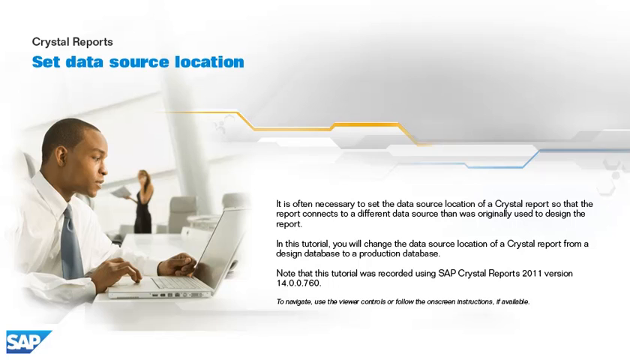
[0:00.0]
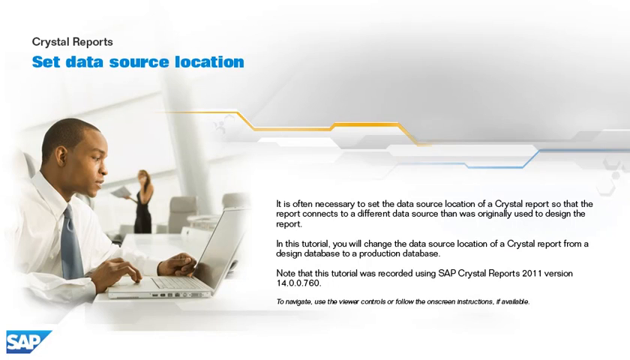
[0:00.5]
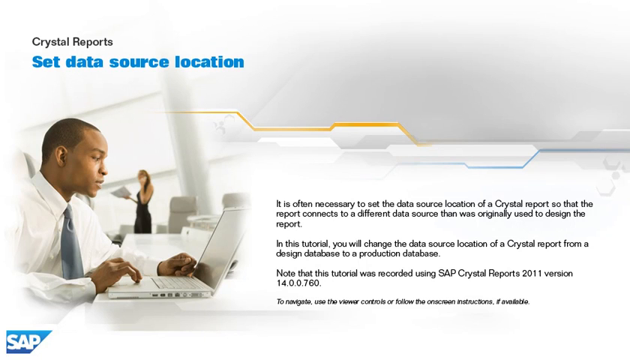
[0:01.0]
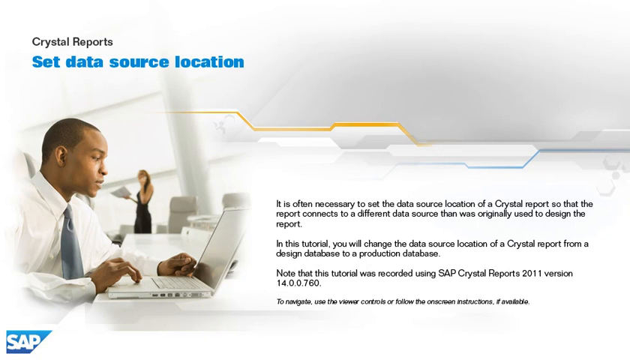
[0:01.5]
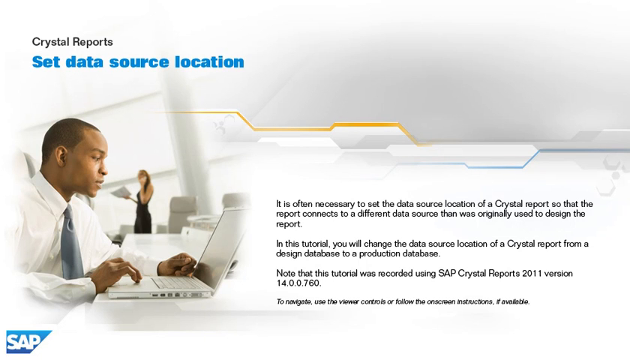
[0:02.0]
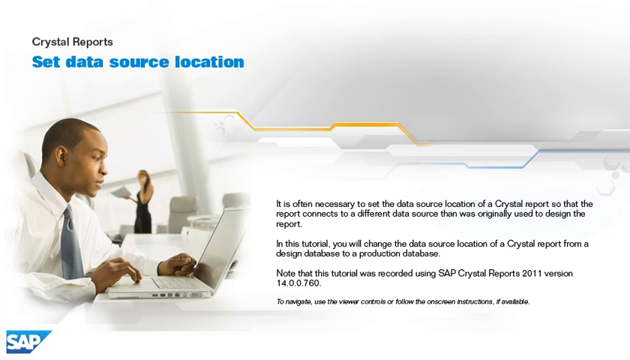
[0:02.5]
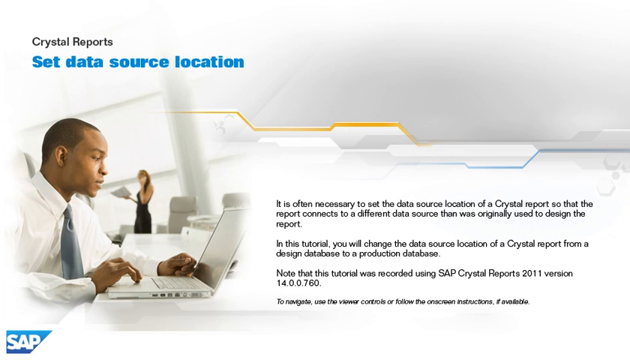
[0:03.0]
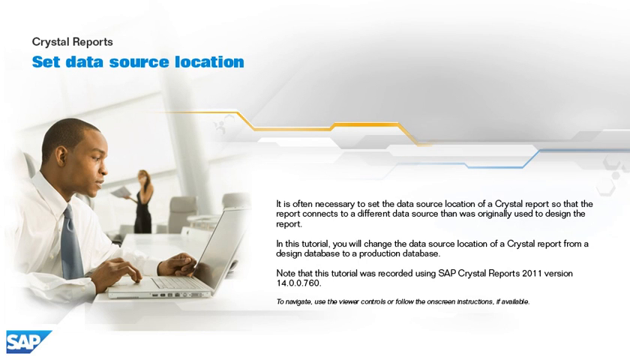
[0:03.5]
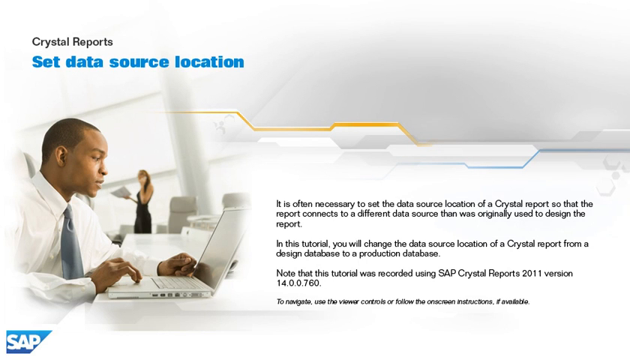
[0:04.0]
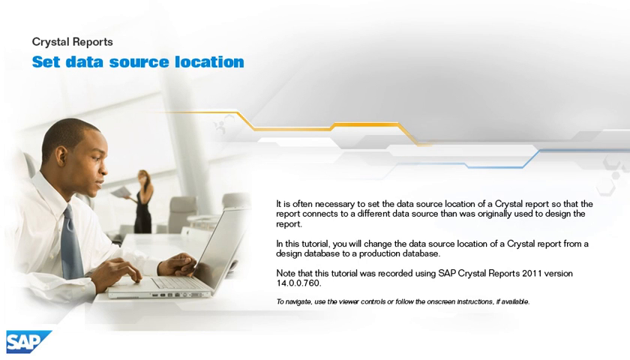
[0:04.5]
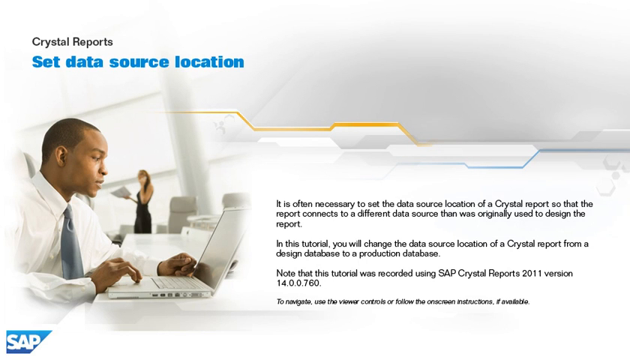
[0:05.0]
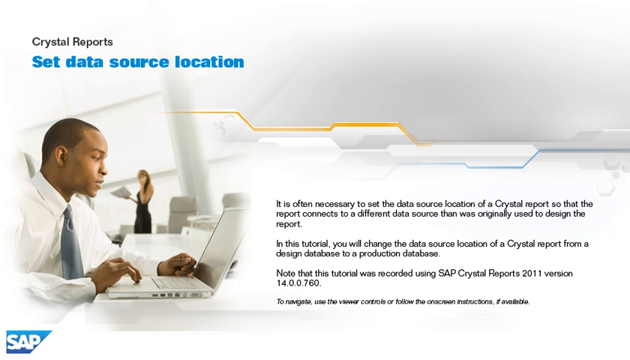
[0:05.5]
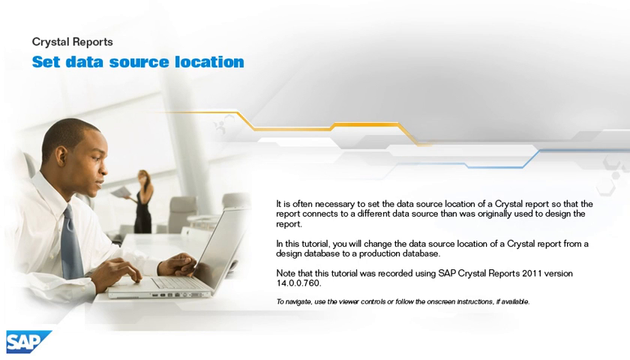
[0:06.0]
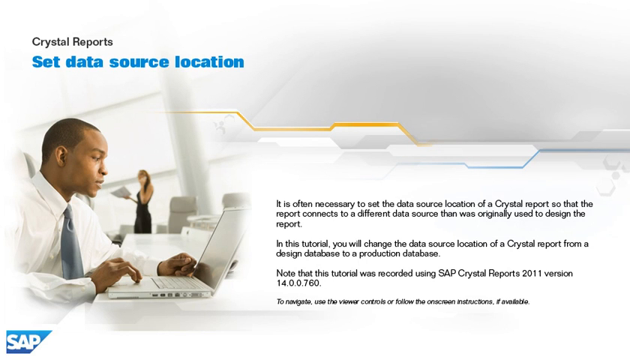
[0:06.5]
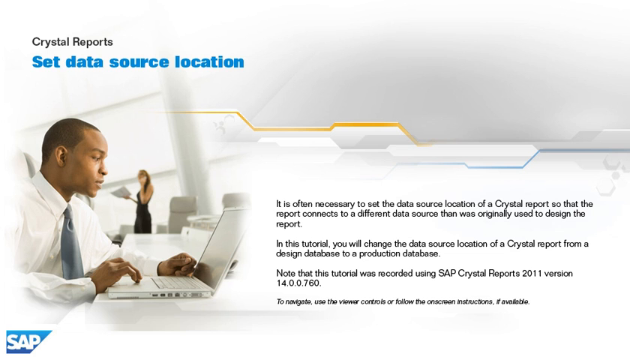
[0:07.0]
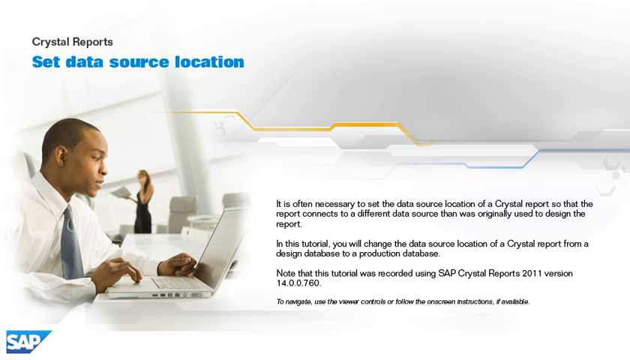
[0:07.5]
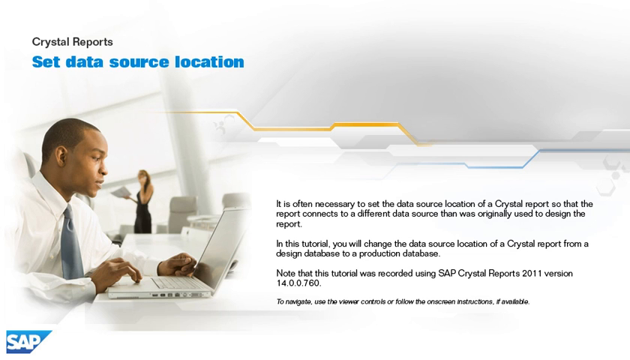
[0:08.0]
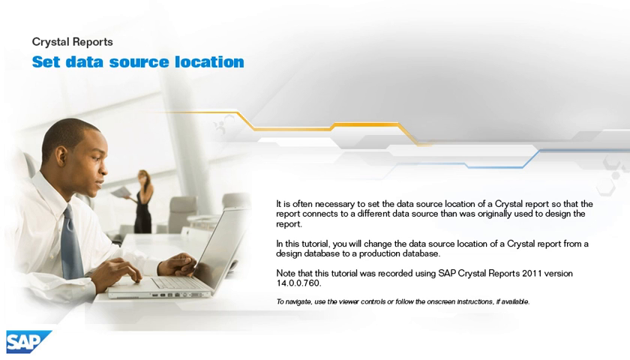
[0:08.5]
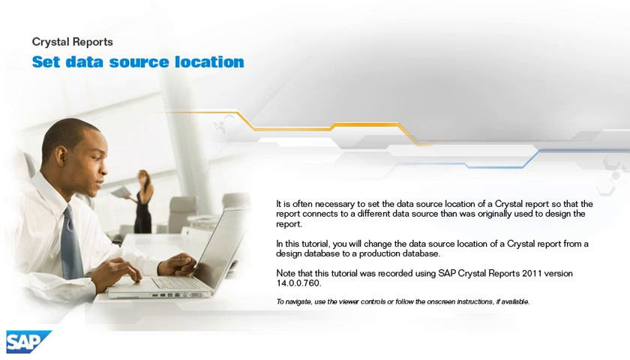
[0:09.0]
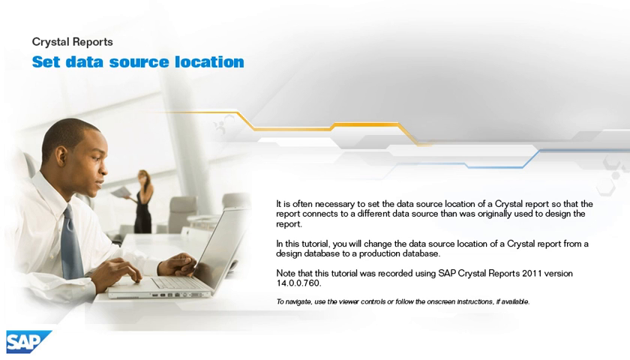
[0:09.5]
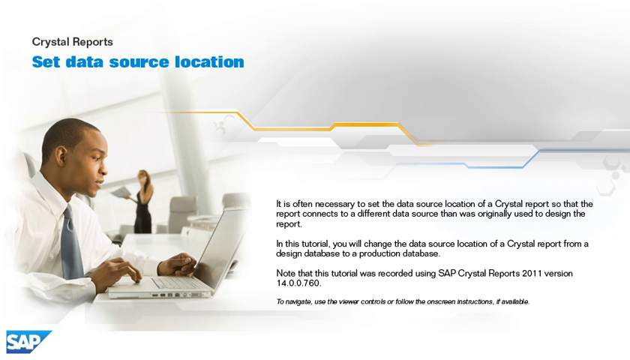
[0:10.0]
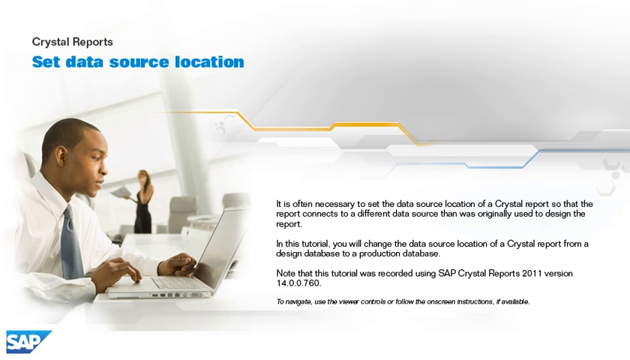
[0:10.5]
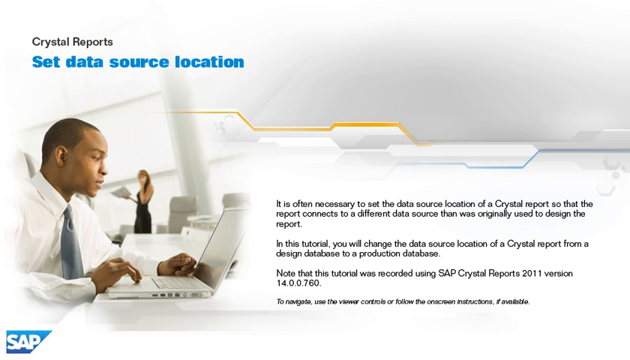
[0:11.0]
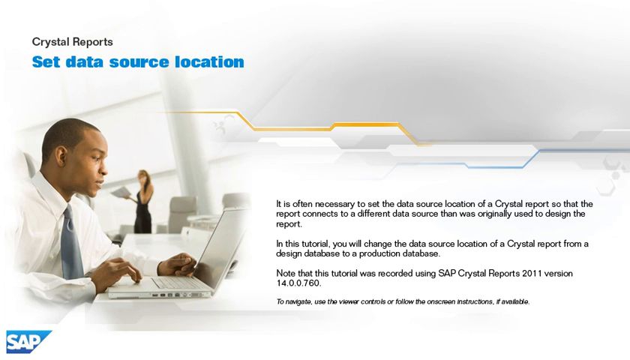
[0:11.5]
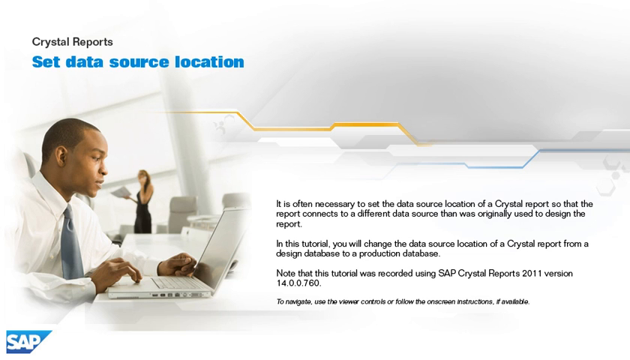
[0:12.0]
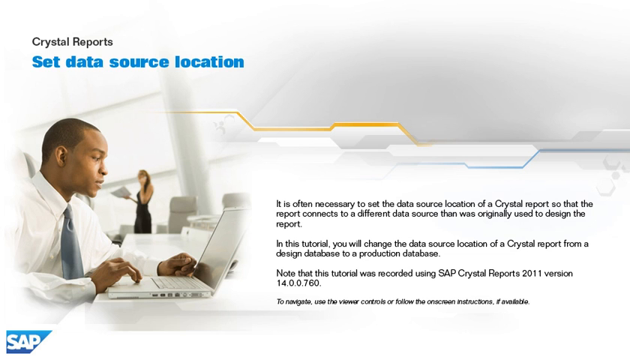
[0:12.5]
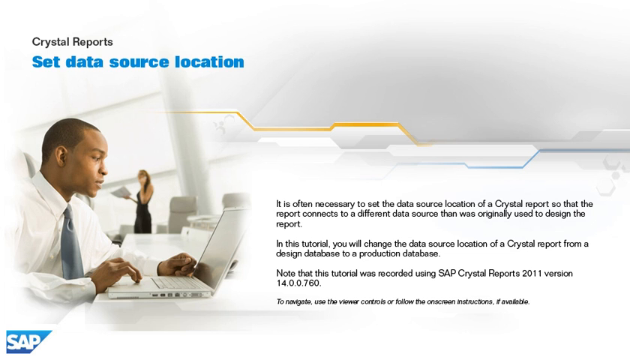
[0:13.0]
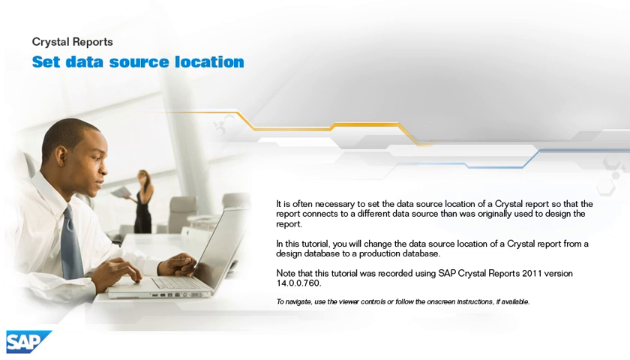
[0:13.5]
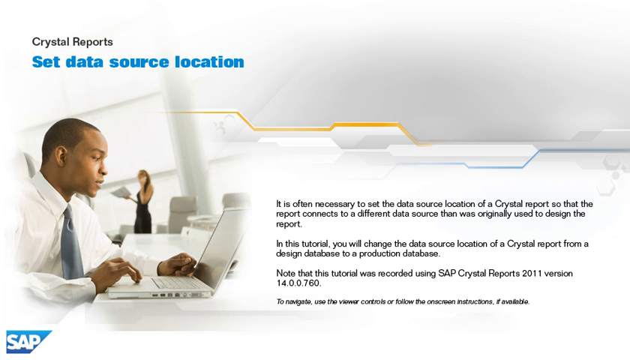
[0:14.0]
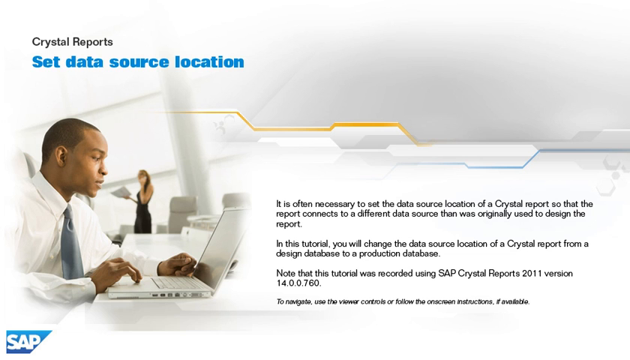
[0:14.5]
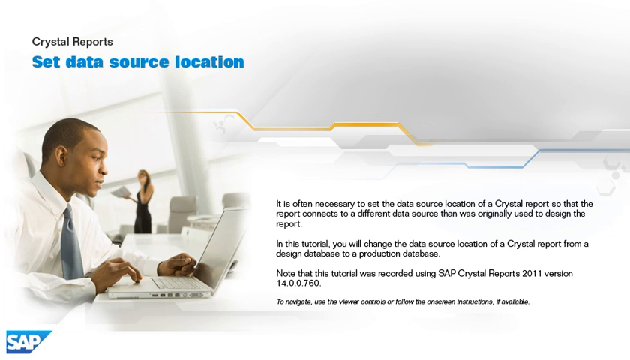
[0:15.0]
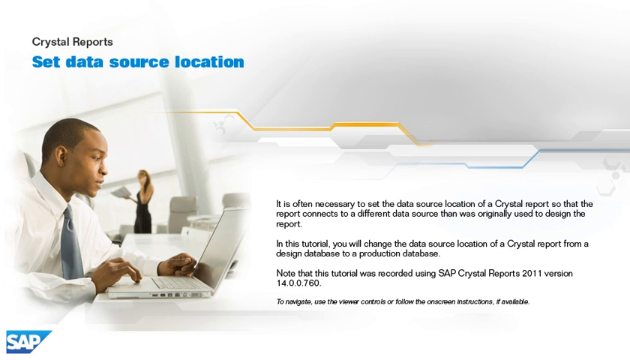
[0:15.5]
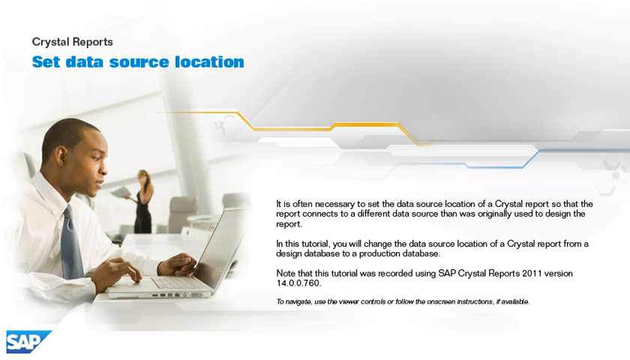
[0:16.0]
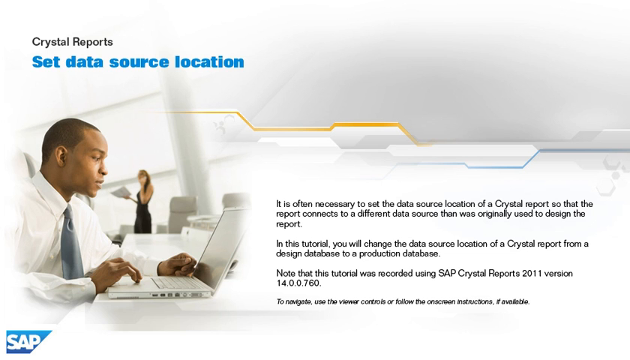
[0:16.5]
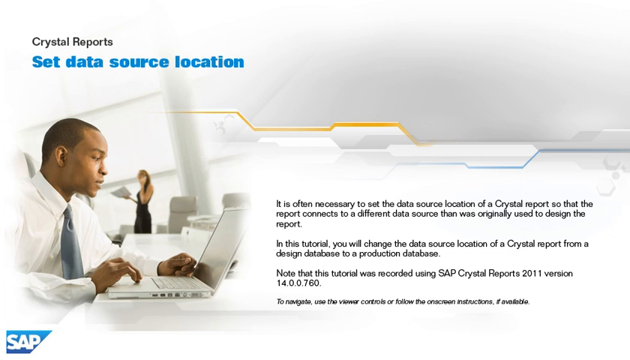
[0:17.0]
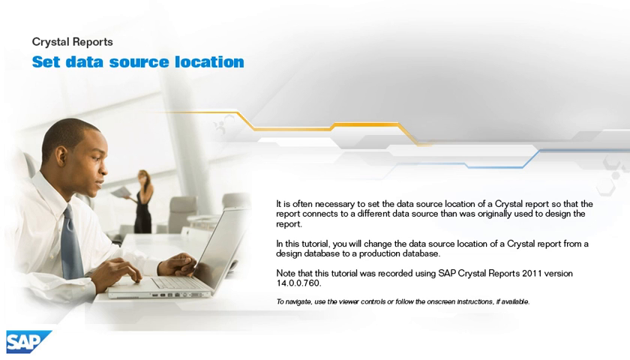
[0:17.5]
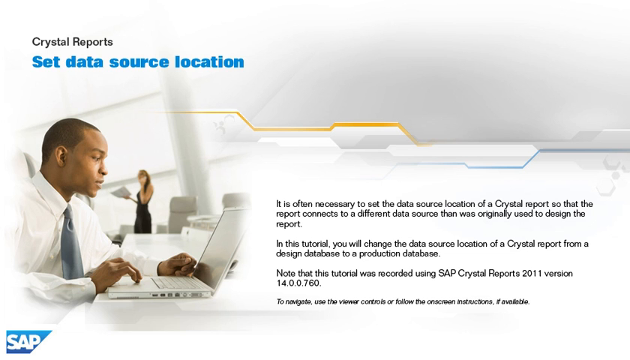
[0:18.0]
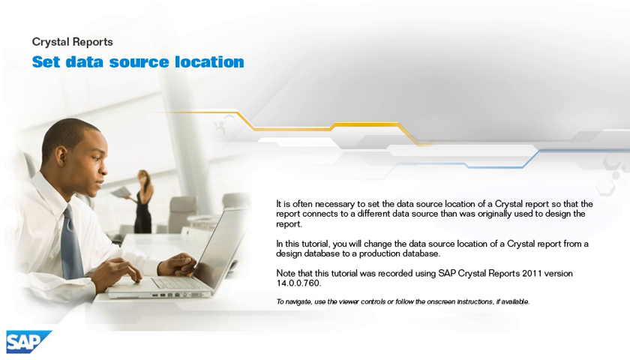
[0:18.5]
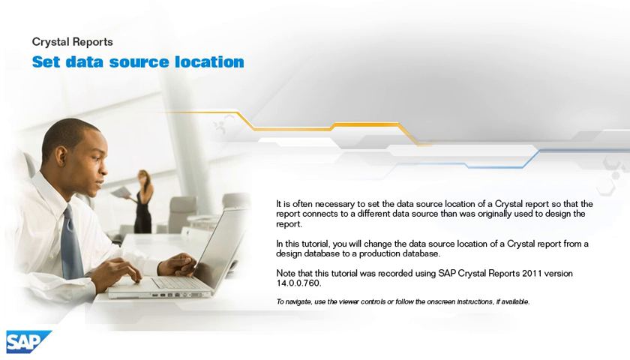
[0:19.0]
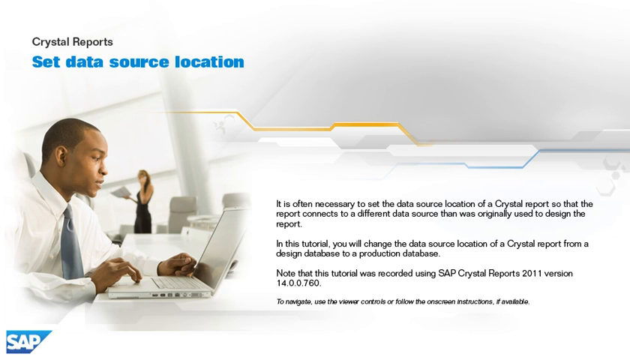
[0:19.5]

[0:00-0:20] A fixed image with a white background opens the video. Small dark gray text reading "crystal reports" sits above blue text that says "set data source location." An image shows a young black man operating a laptop computer, his right hand on the trackpad and his left hand resting next to the laptop. He is at what appears to be a white desk and wears a white dress shirt with a blue-gray necktie. In the background, a woman in a sleeveless black outfit appears to be speaking on the phone while holding paperwork; office chairs and what appear to be large industrial windows are also in the background. Next to this graphic, black text on the white background reads: "It is often necessary to set the data source location of a crystal report so that the report connects to a different data source than was originally used to design the report. In this tutorial, you will change the data source location of a crystal report from a design database to a production database. Note that this tutorial was recorded using SAP Crystal Reports 2011 version 4.0.0760." More black text below that is illegible.